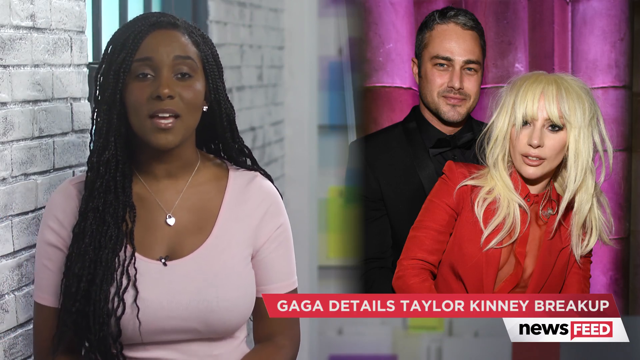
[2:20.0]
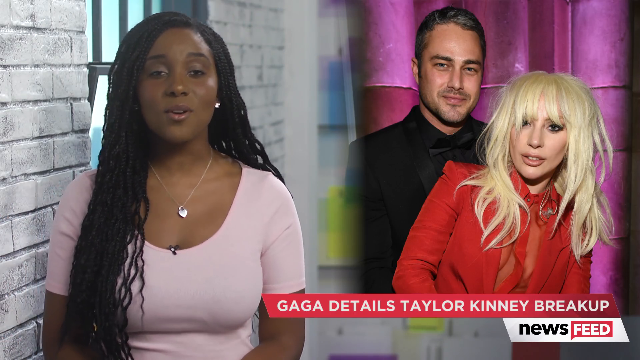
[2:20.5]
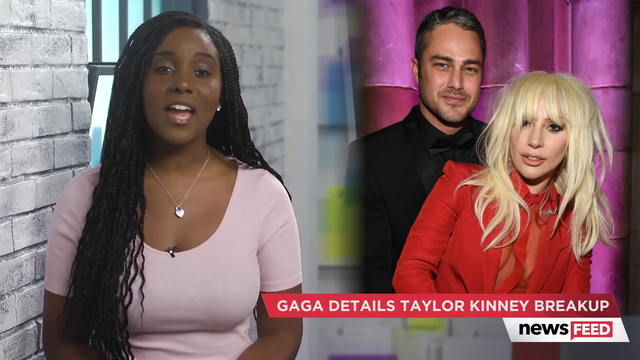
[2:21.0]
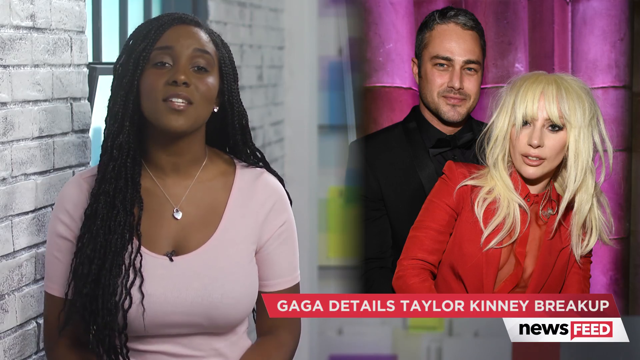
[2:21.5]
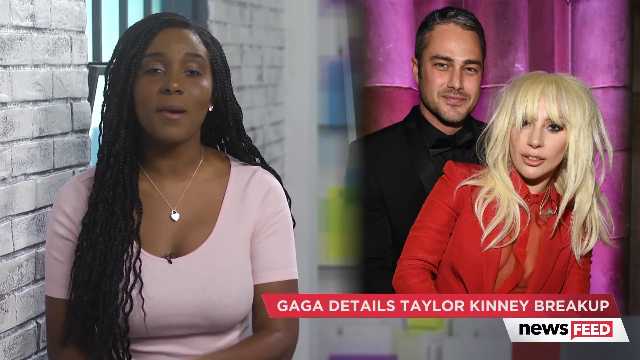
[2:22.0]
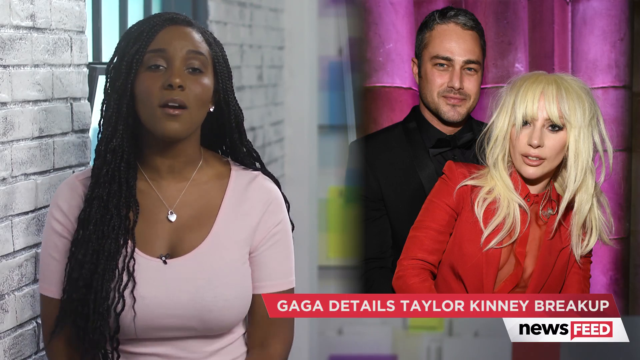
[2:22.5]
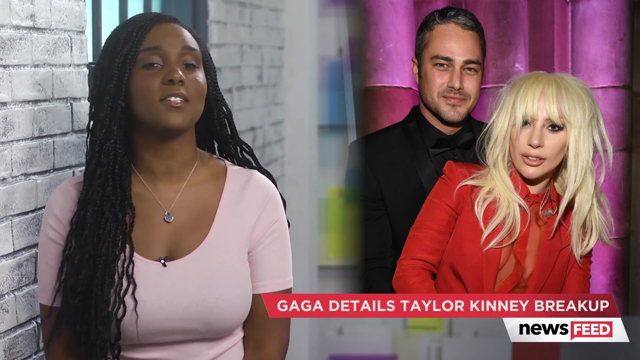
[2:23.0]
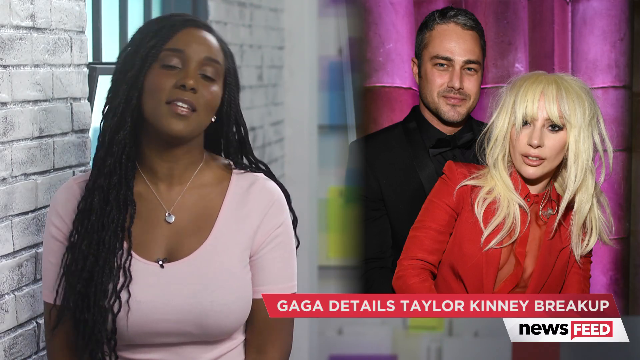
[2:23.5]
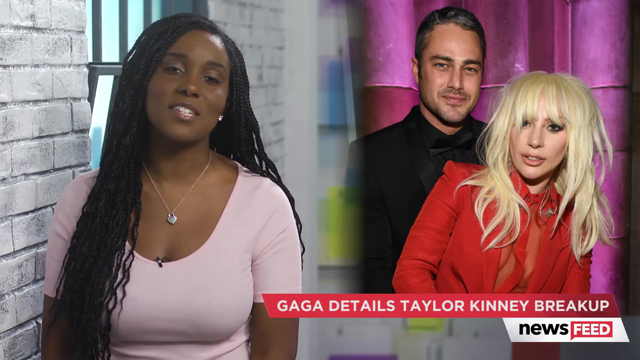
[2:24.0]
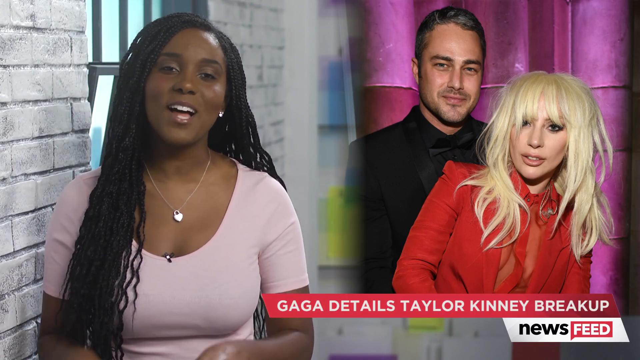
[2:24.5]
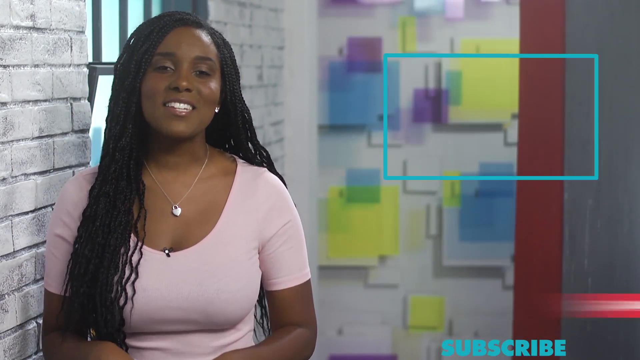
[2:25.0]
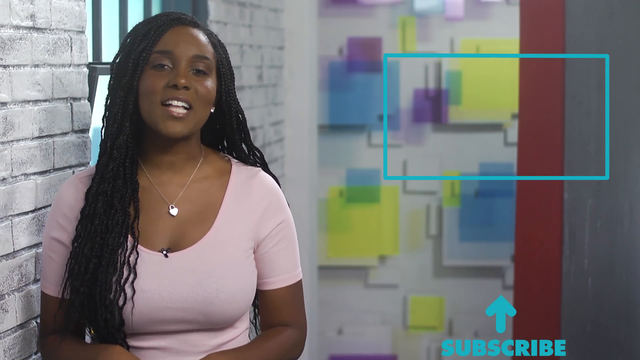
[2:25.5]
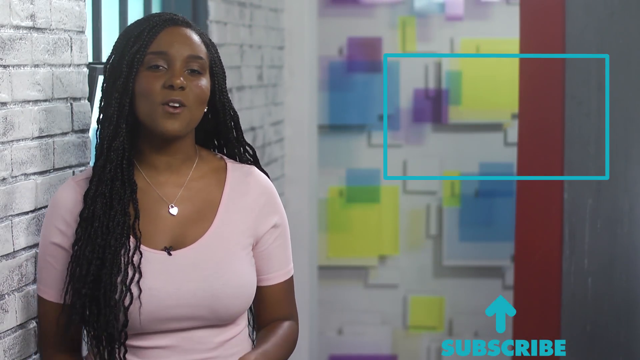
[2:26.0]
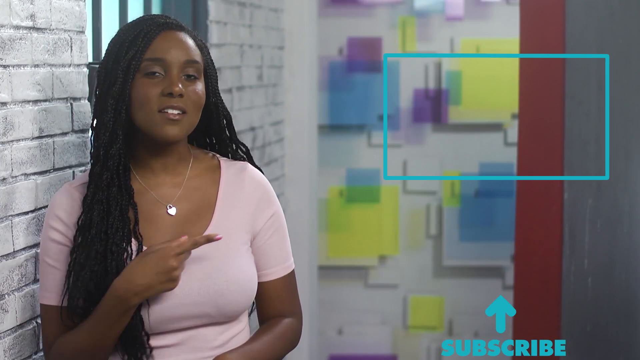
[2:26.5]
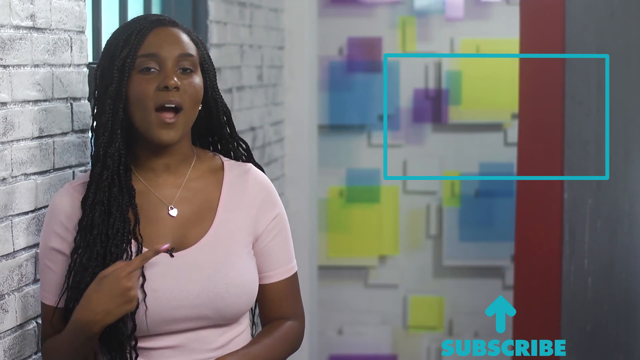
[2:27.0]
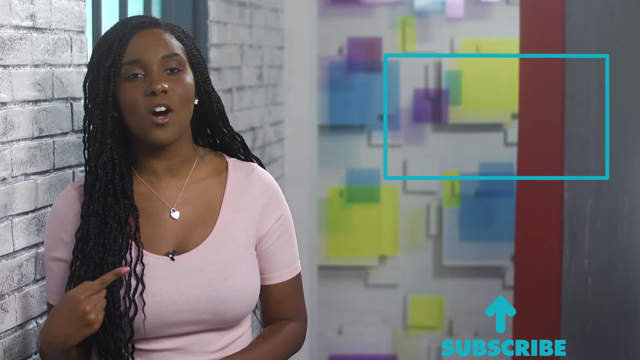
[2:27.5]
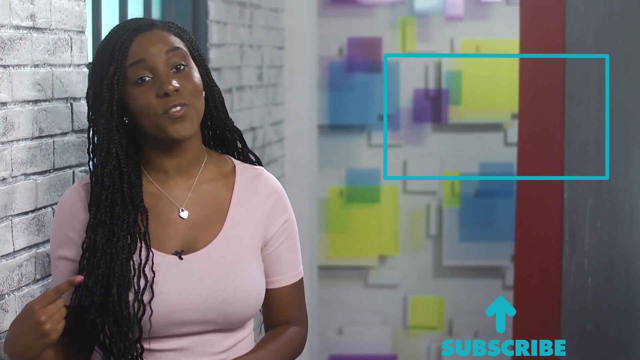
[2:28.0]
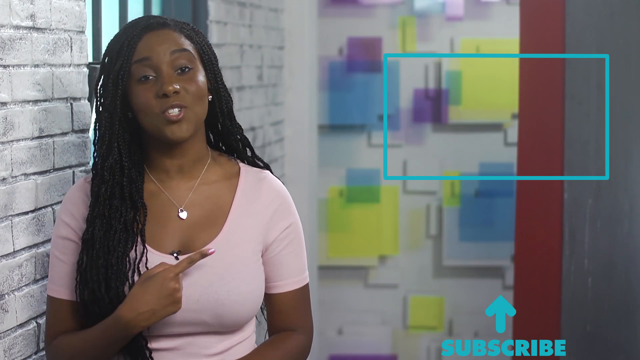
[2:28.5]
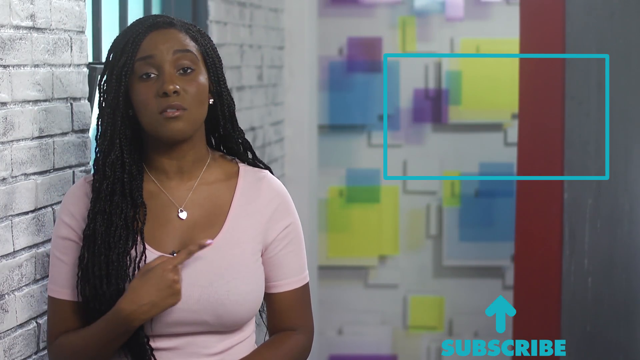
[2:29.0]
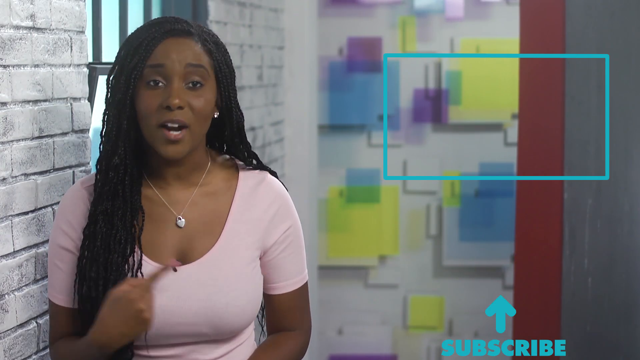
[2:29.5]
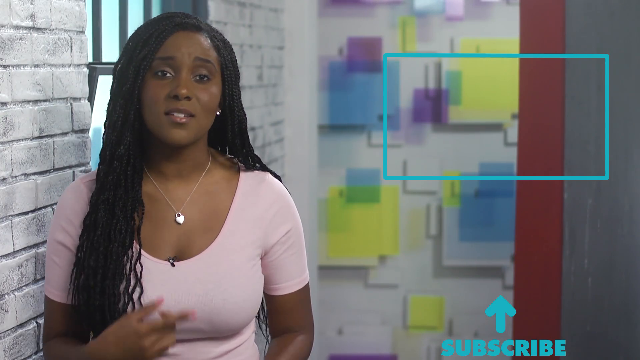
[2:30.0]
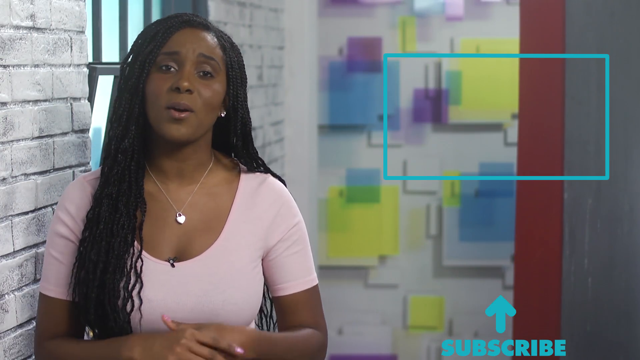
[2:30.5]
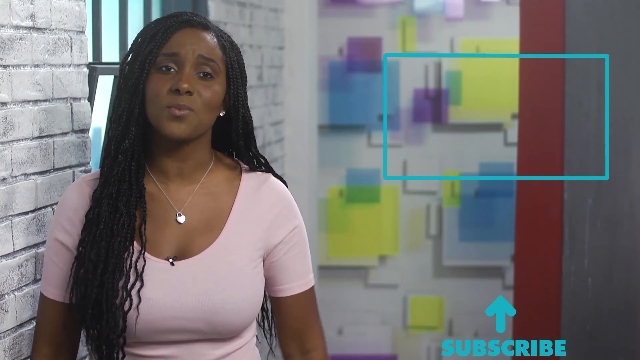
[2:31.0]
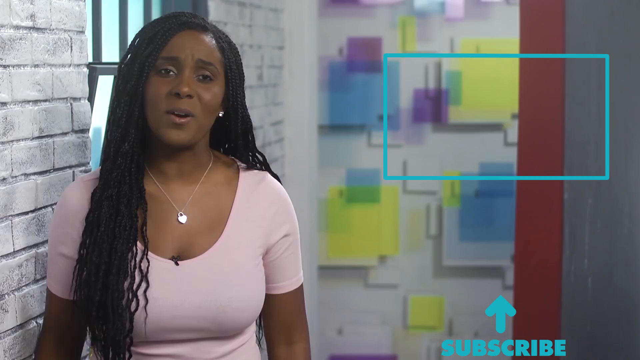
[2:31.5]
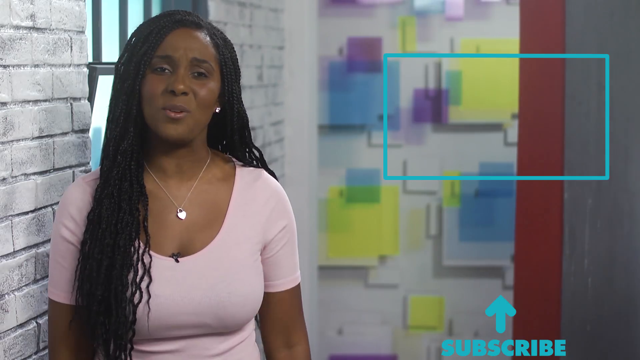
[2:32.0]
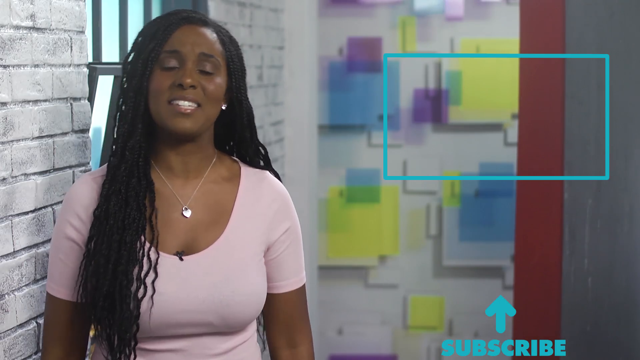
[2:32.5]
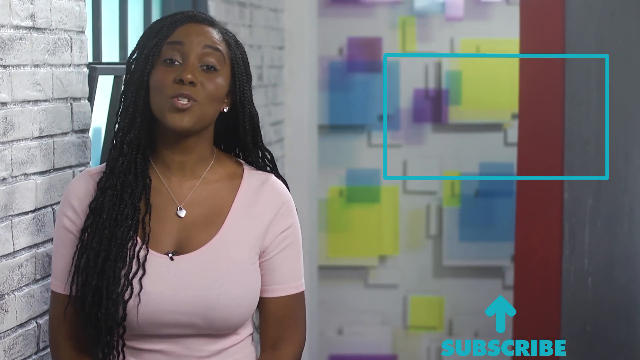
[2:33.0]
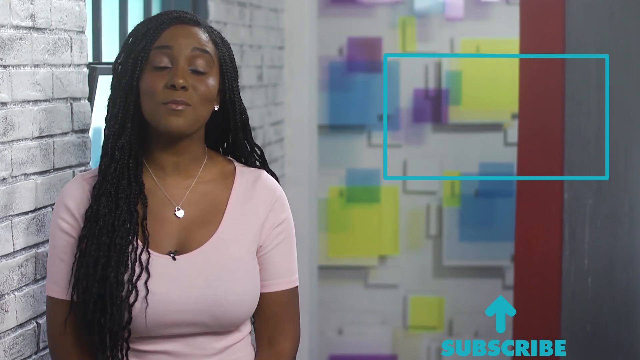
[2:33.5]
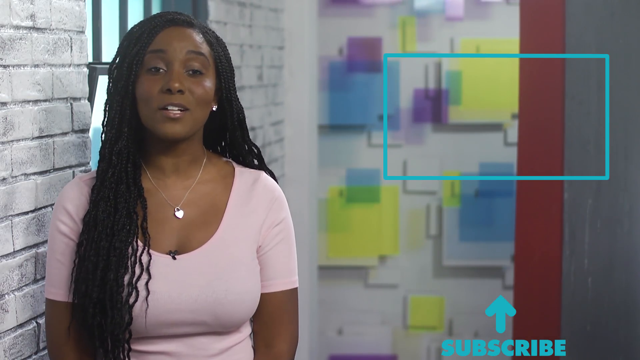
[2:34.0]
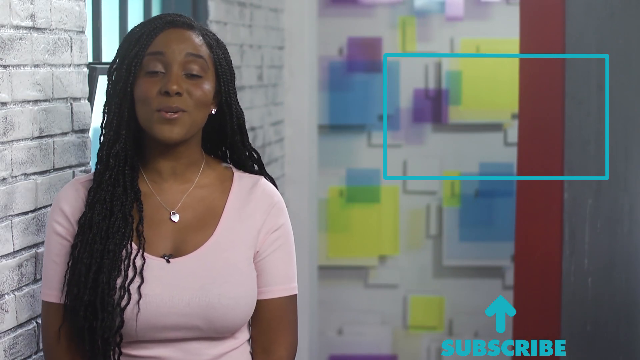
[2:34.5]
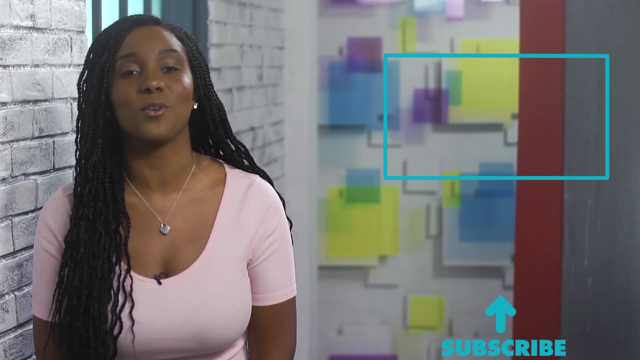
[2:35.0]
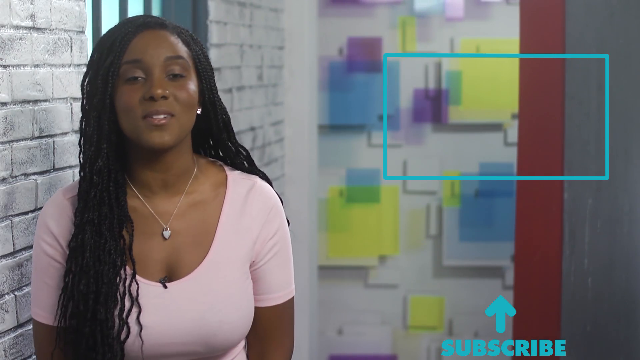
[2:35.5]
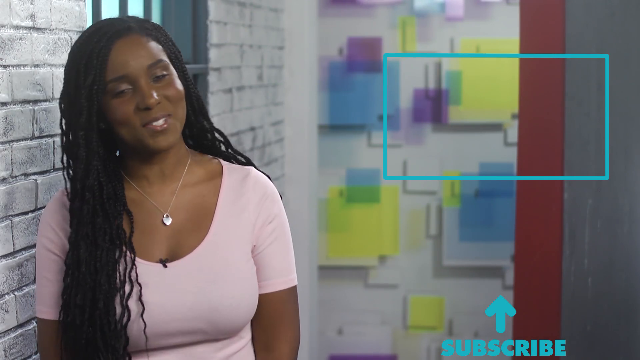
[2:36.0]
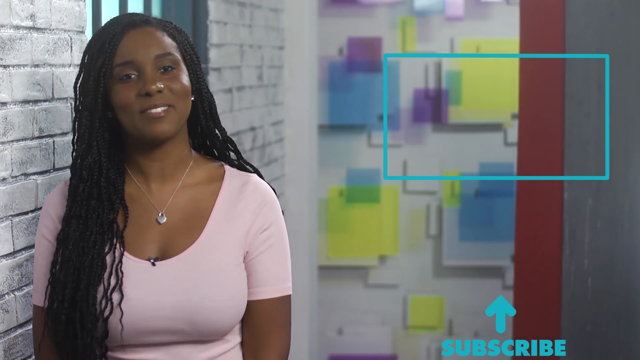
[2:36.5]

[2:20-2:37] The segment shows the host, a female African-American woman in a pink top wearing a necklace with a heart-shaped lock pendant. She is in contact with a white brick wall, and the windows behind her have black bars. To her right is an image of Lady Gaga standing in front of her partner. Lady Gaga wears a red outfit that slightly exposes her chest and has very long blonde hair; her partner behind her wears a completely black suit, black shirt, and black bow tie. Both pose for the camera in front of a pink wall. A red banner at the bottom of the image says "Lady Gaga details Taylor-Kinney breakup".